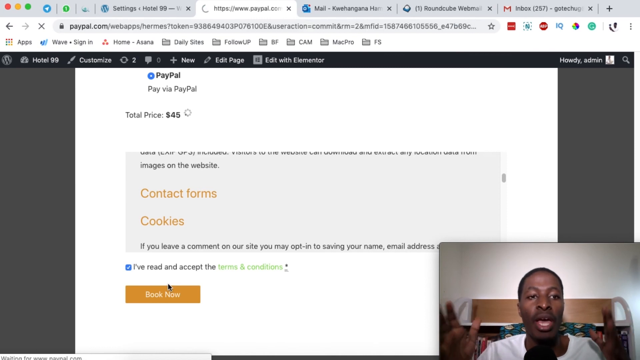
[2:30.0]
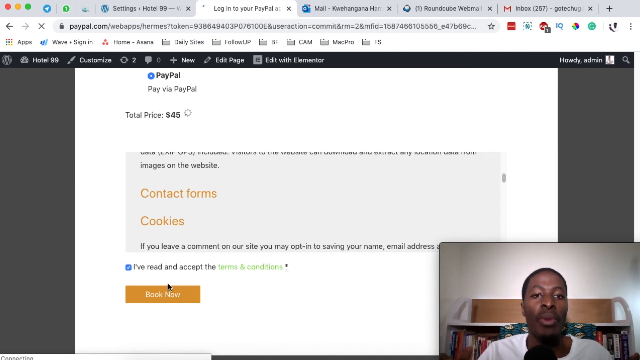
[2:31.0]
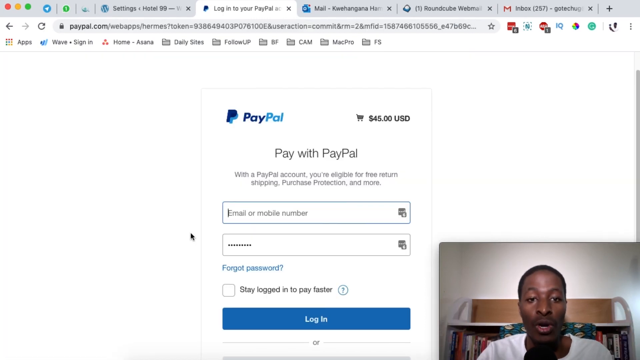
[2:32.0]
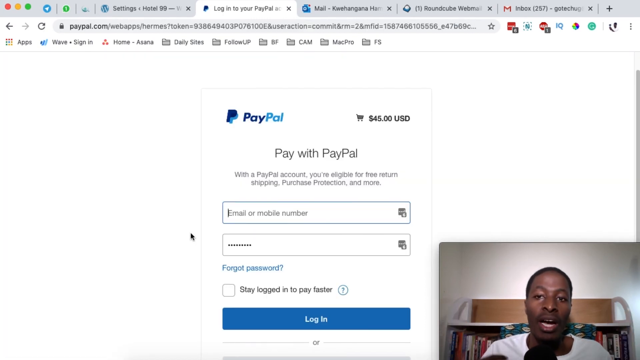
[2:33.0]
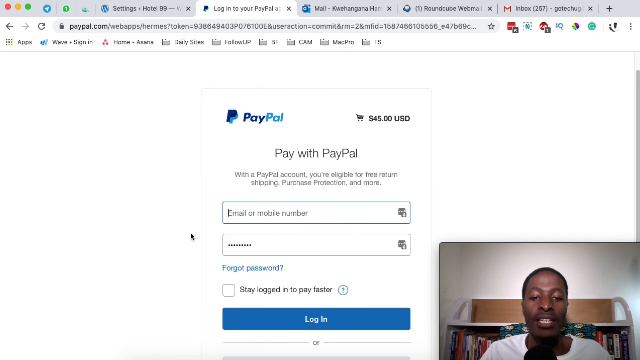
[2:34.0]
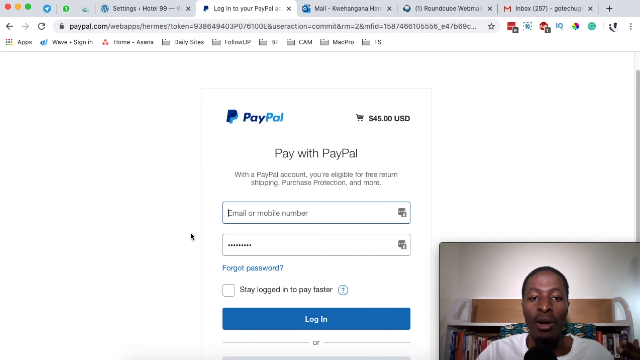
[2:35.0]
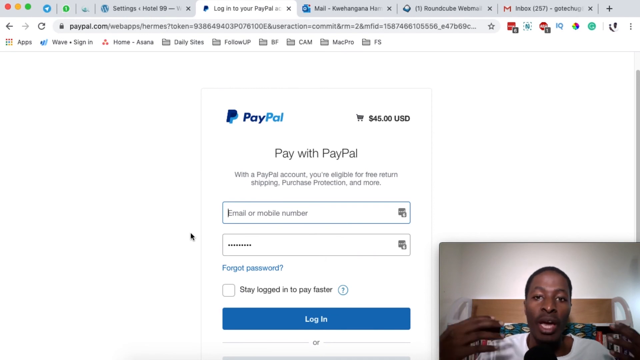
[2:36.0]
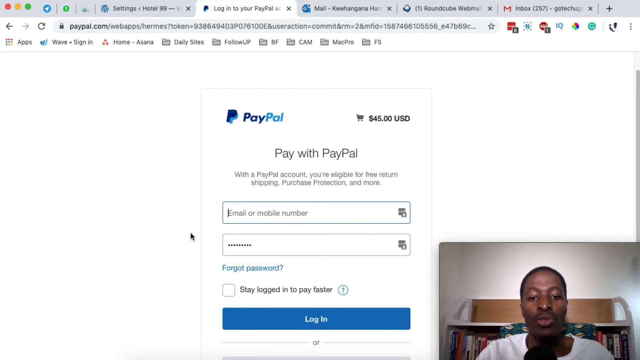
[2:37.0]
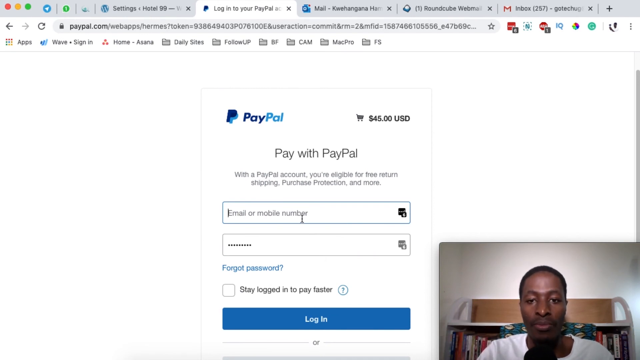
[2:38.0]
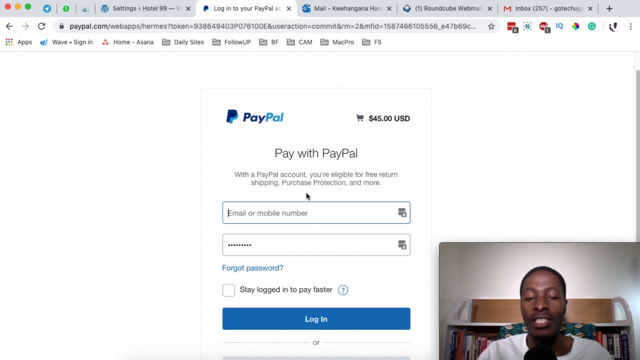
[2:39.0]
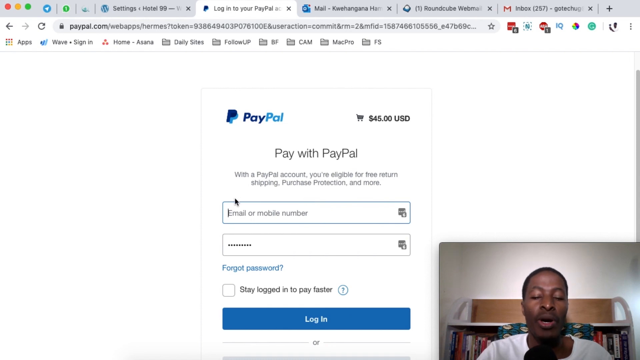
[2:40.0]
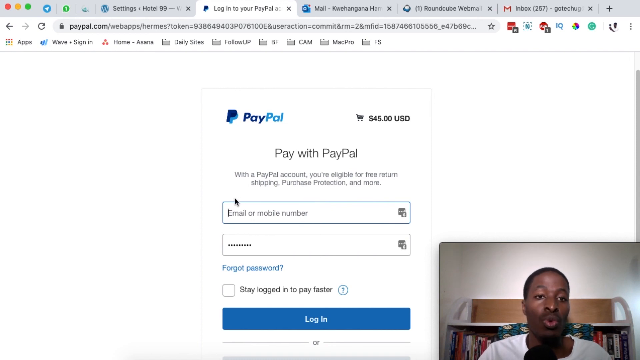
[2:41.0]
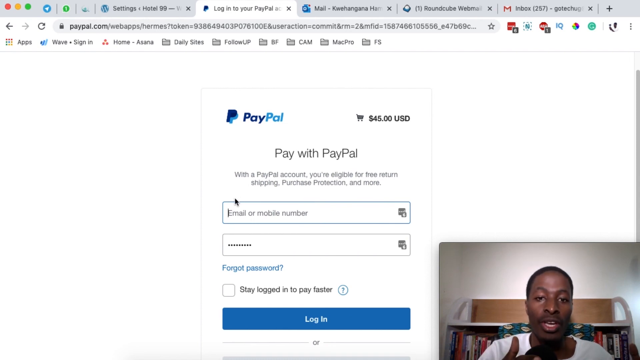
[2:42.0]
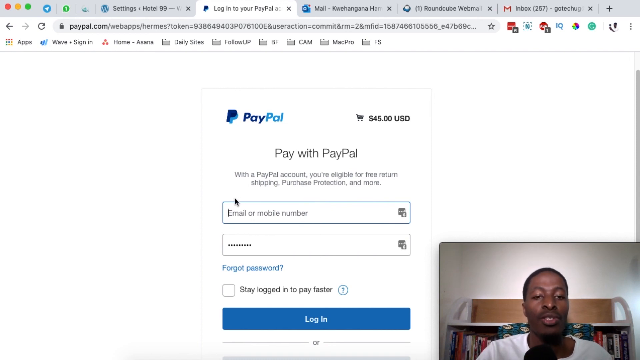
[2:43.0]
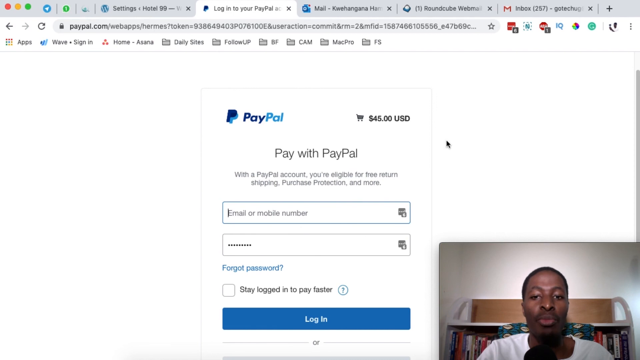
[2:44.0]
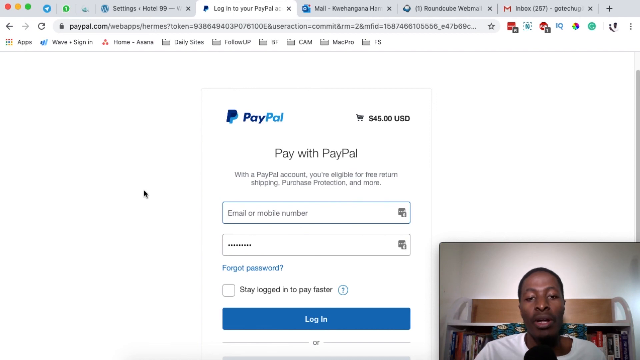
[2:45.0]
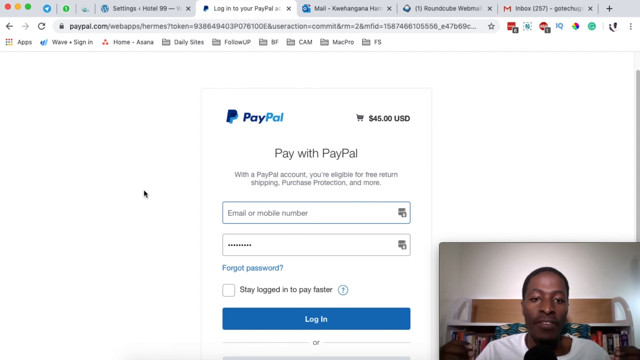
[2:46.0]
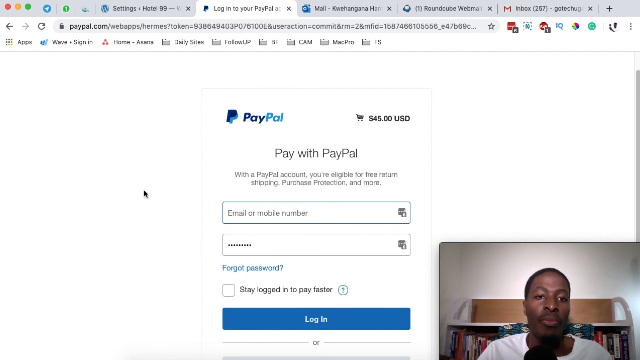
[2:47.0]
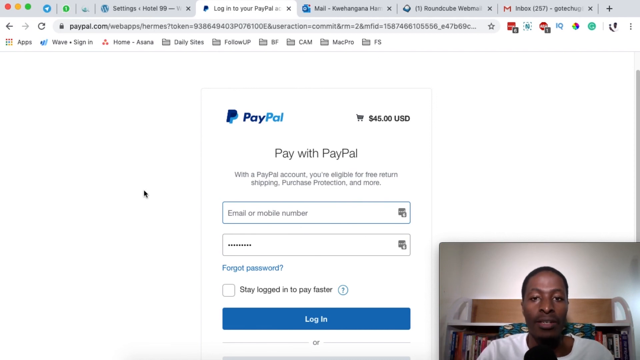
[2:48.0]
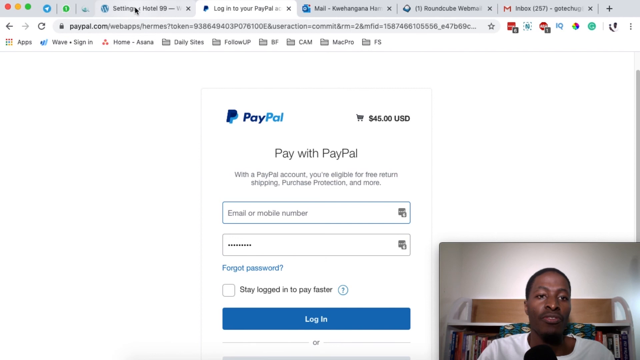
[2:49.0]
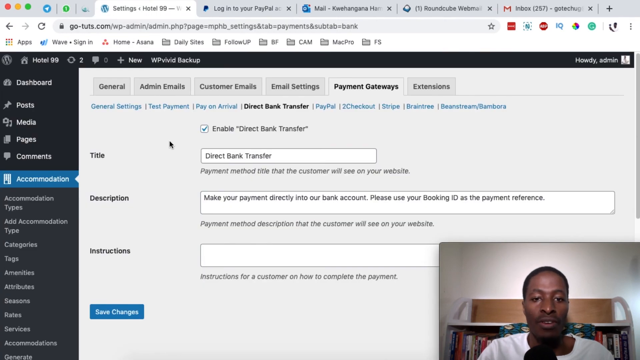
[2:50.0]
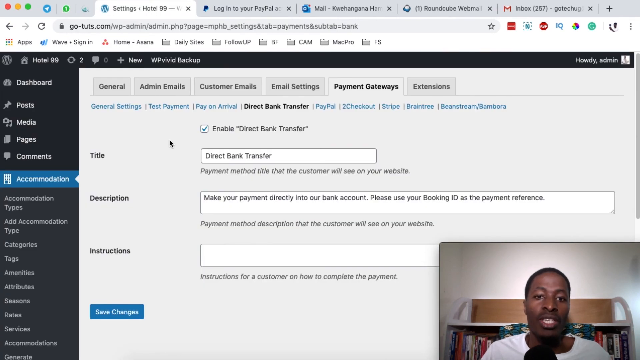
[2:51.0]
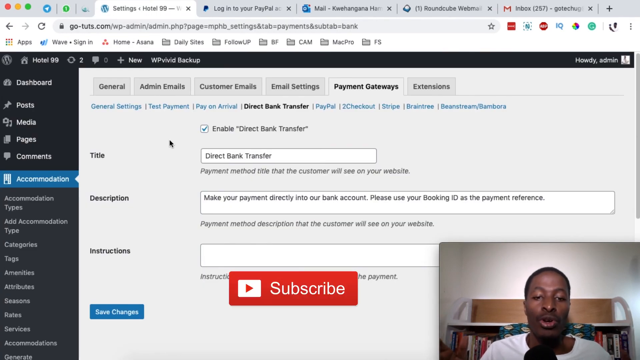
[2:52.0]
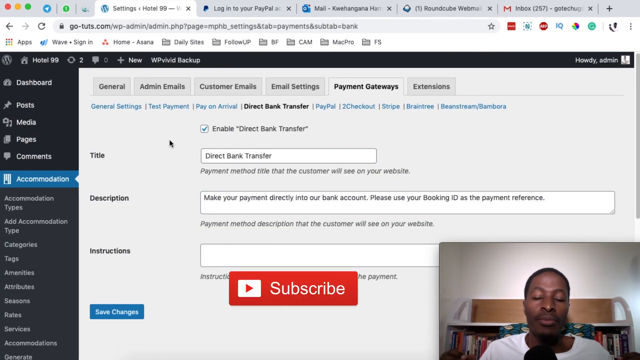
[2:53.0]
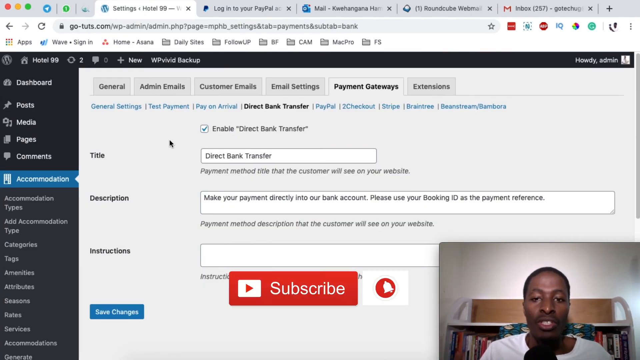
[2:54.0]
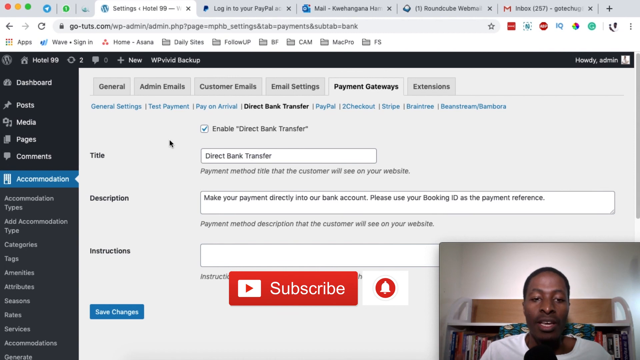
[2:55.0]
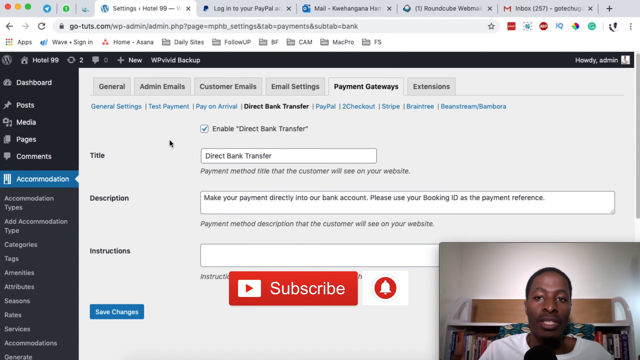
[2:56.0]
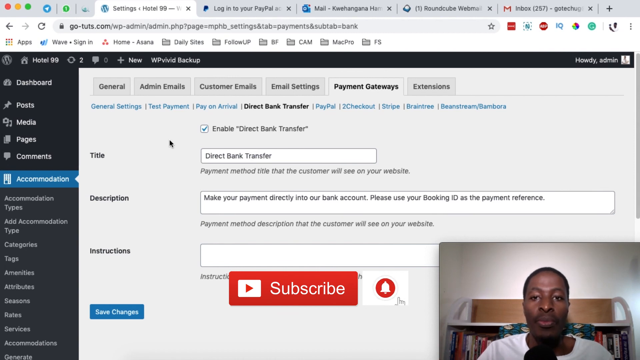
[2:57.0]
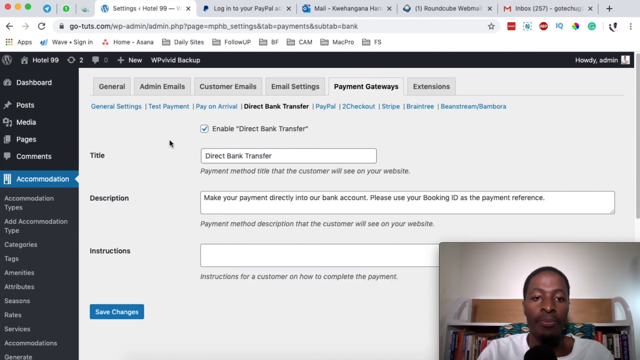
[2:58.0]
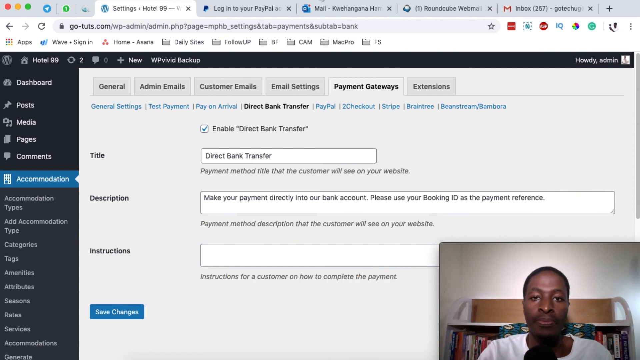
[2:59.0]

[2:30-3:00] A person's video appears in the lower right corner of the screen while a website is used in the background. The PayPal website, paypal.com, is opened, showing "pay with PayPal," with $45 listed in the upper right corner across from the PayPal logo. The person then goes back to the settings panel in the WordPress page, and a subscribe button, apparently YouTube's, pops up in the middle of the page with a bell icon to its right.